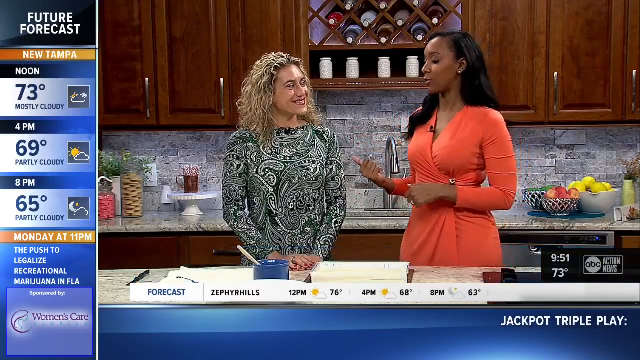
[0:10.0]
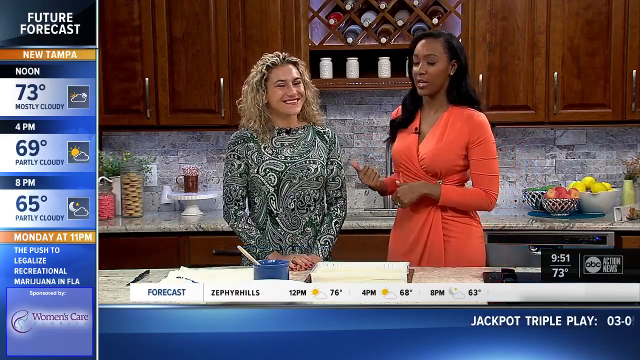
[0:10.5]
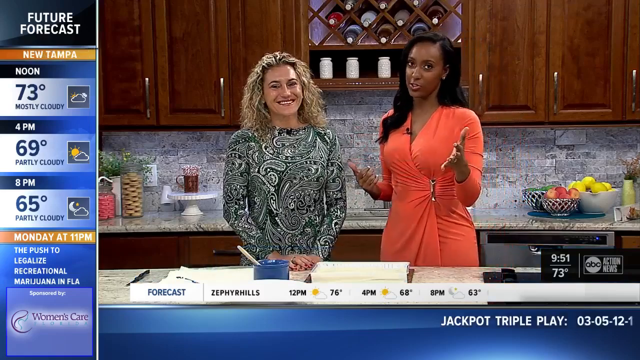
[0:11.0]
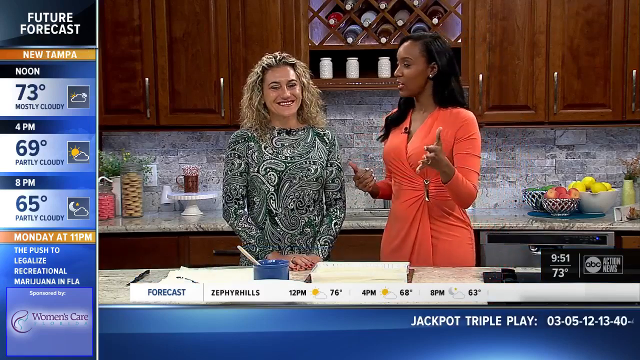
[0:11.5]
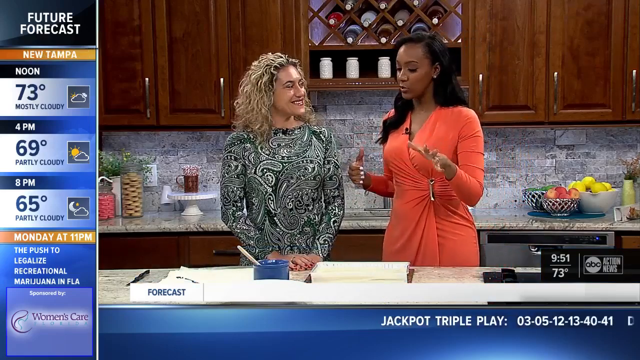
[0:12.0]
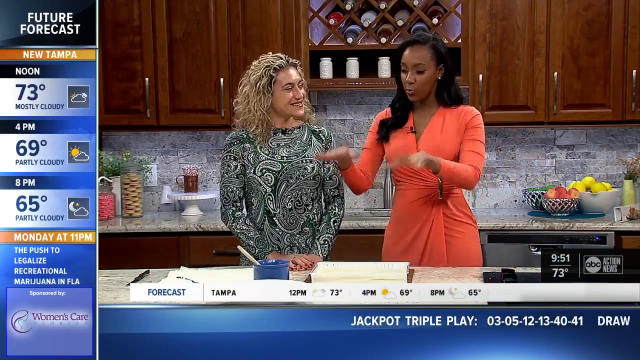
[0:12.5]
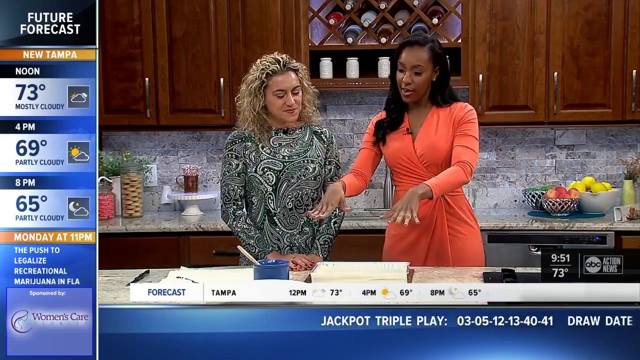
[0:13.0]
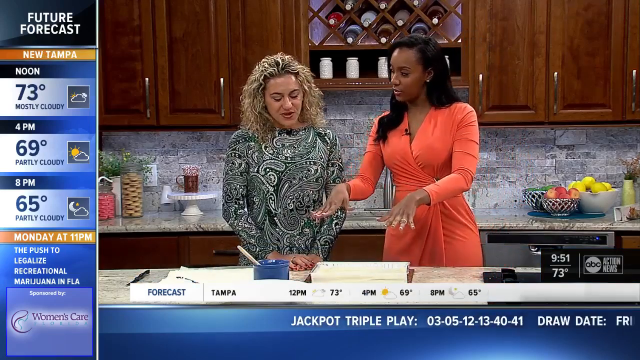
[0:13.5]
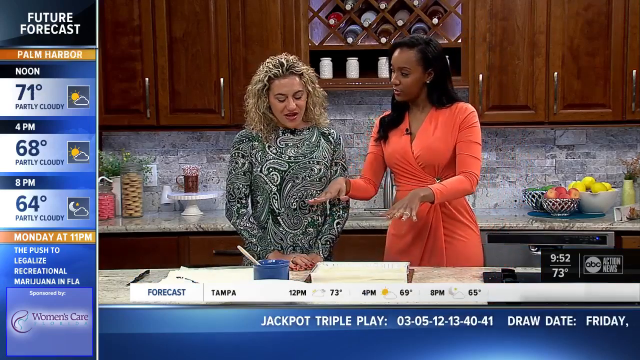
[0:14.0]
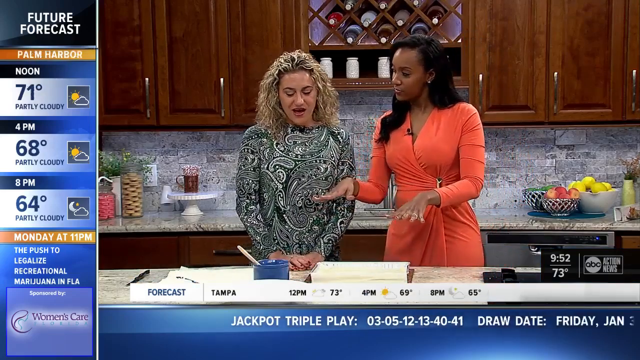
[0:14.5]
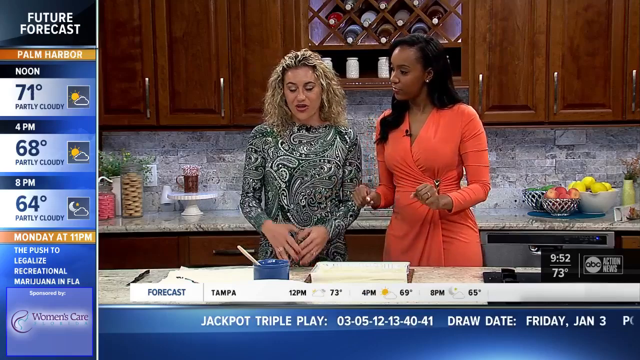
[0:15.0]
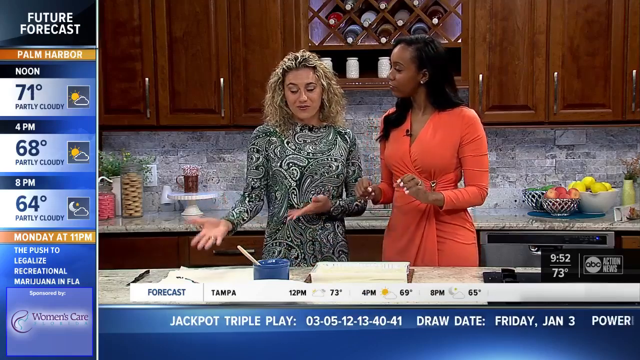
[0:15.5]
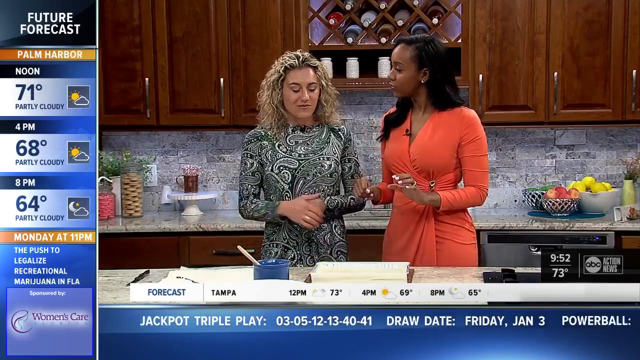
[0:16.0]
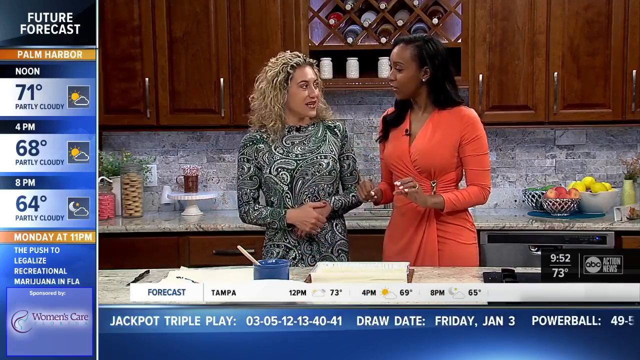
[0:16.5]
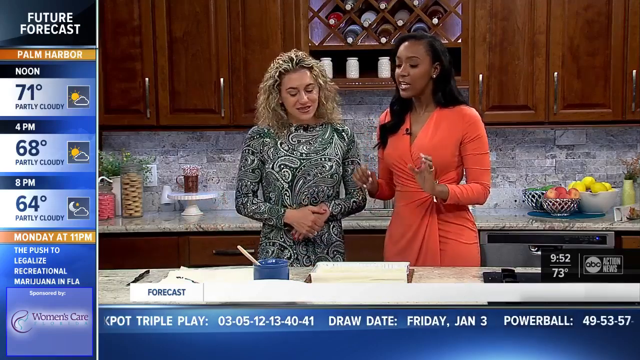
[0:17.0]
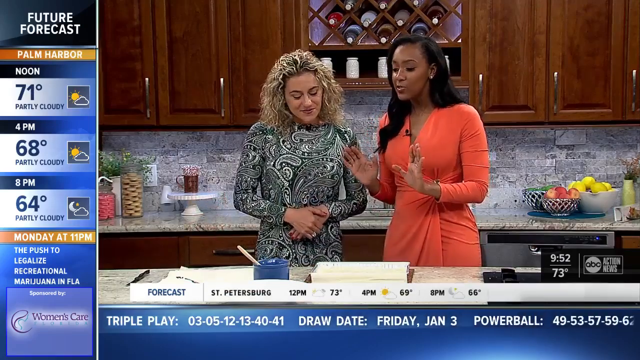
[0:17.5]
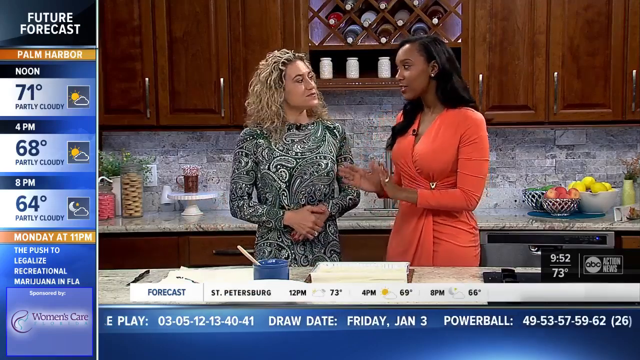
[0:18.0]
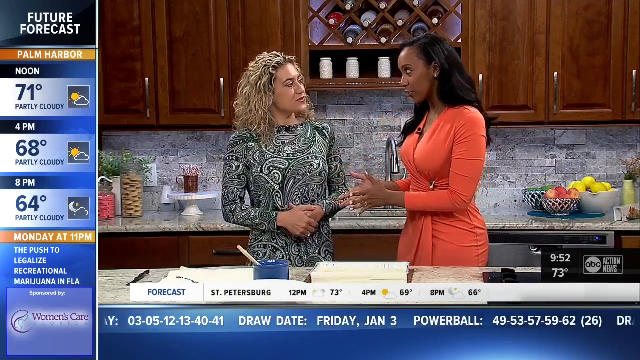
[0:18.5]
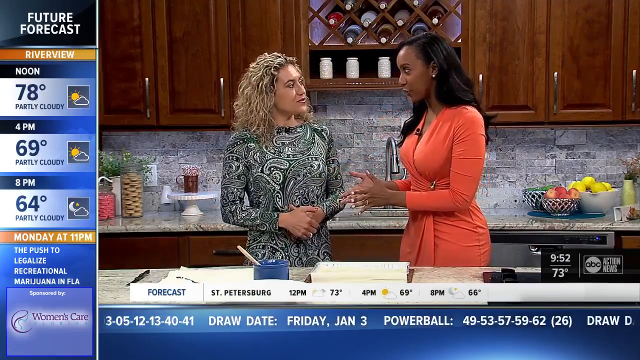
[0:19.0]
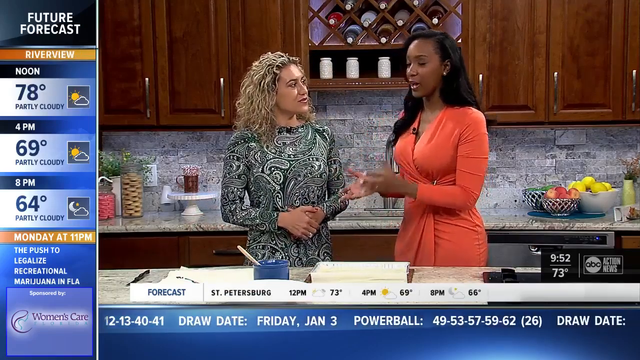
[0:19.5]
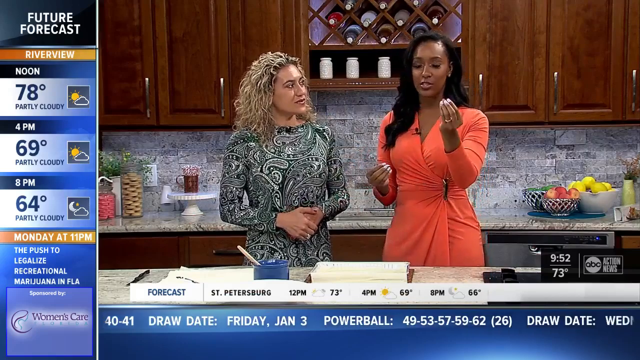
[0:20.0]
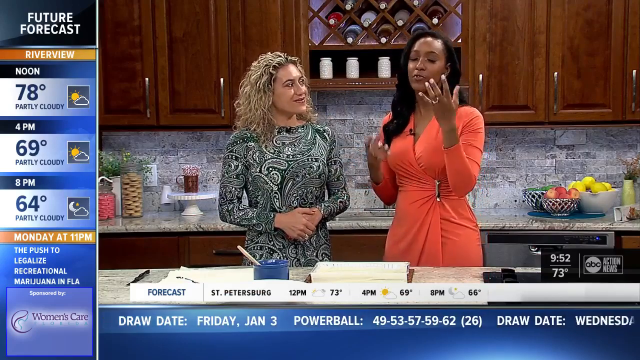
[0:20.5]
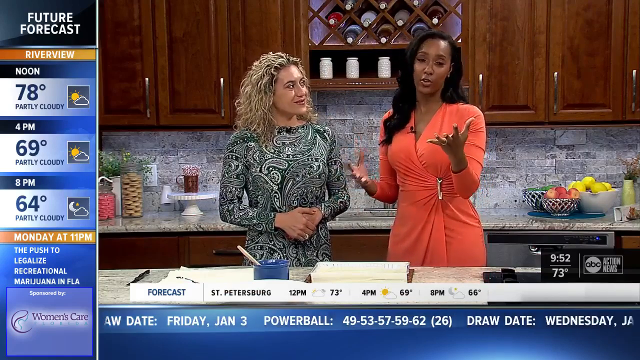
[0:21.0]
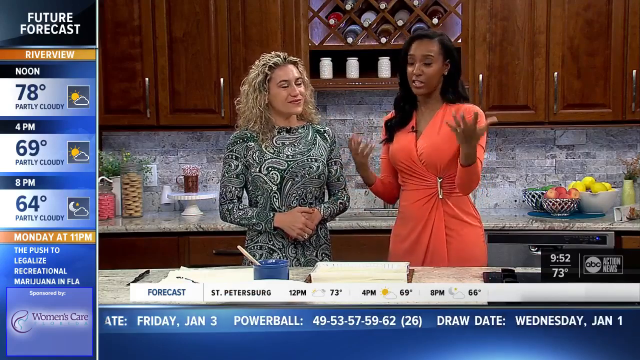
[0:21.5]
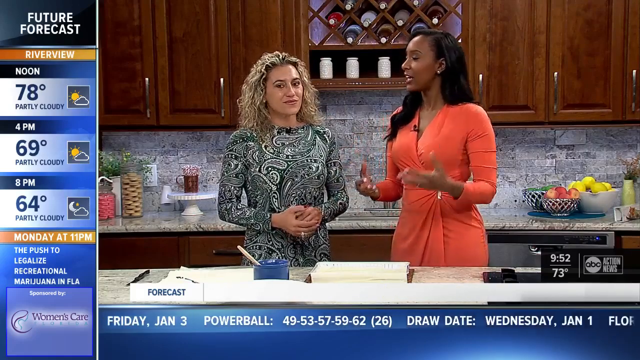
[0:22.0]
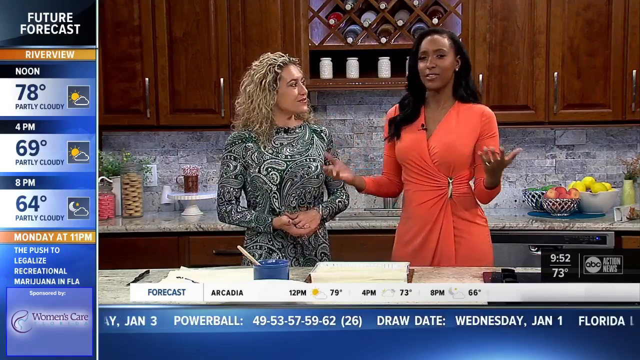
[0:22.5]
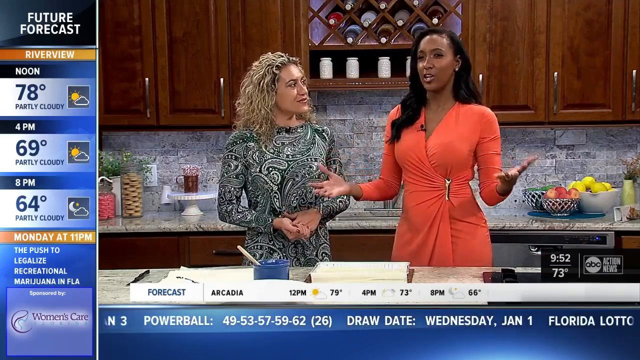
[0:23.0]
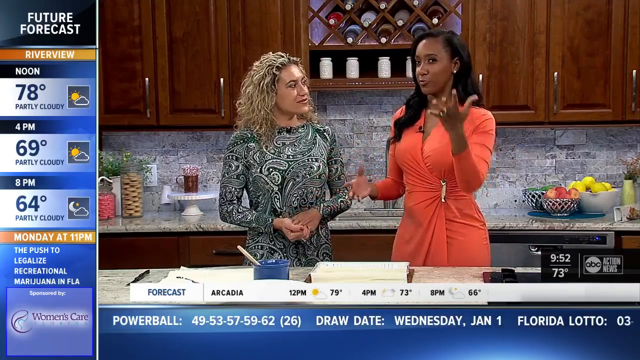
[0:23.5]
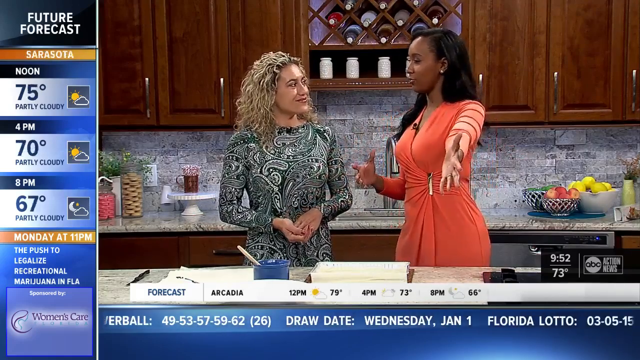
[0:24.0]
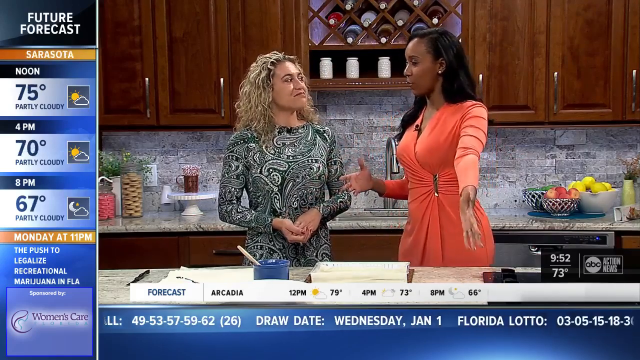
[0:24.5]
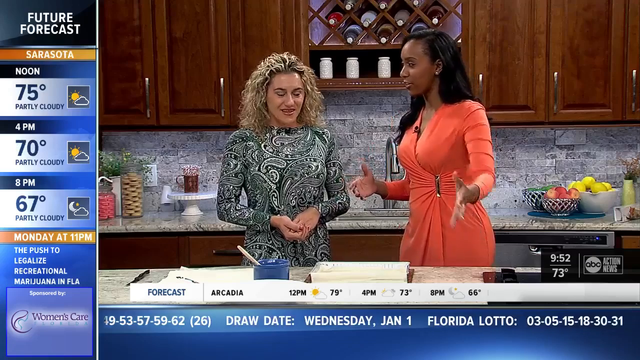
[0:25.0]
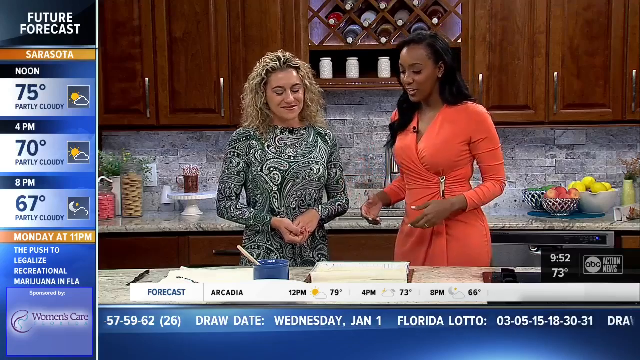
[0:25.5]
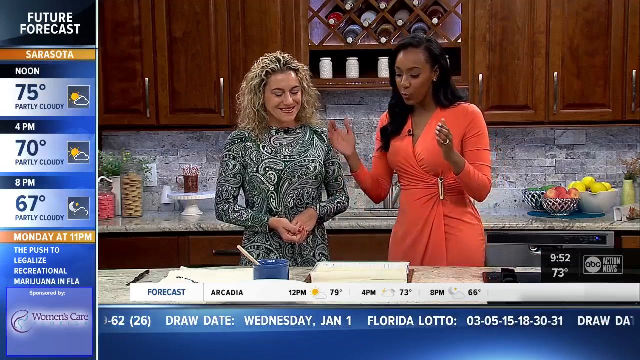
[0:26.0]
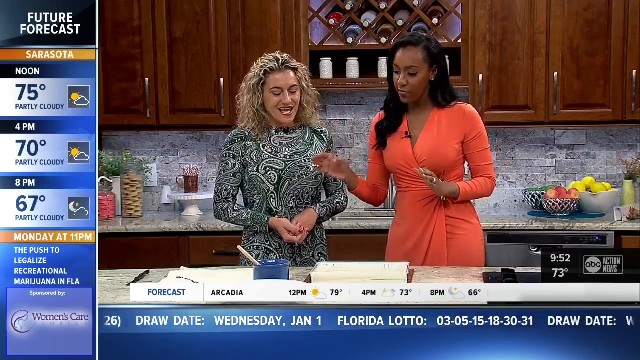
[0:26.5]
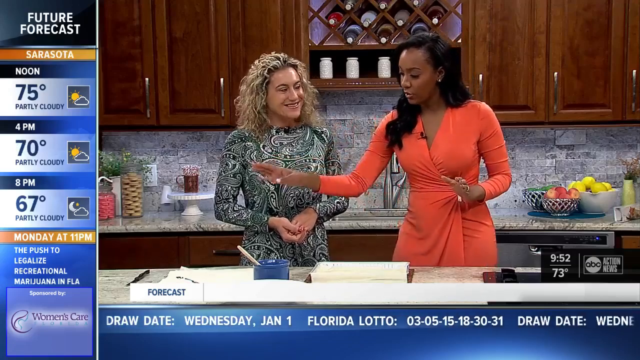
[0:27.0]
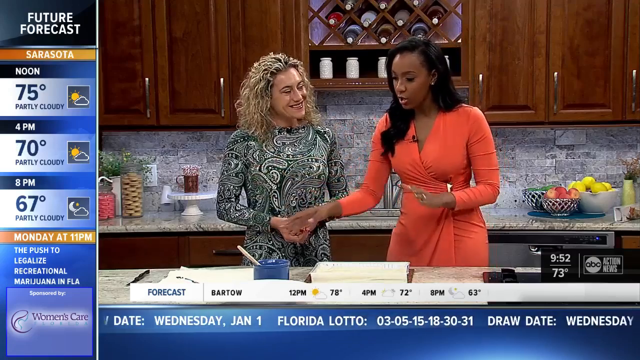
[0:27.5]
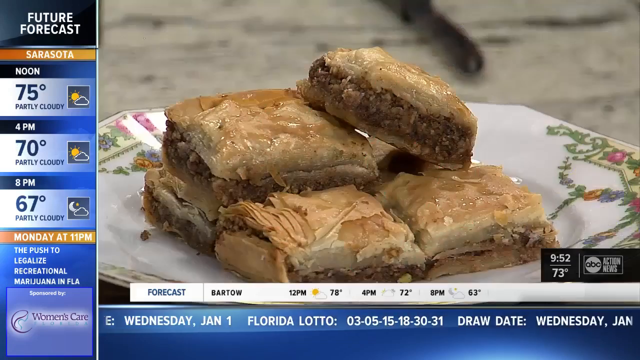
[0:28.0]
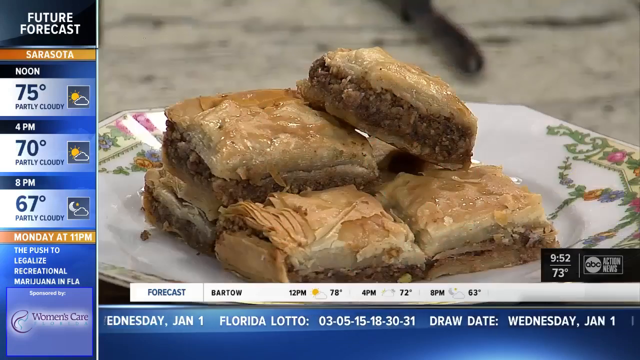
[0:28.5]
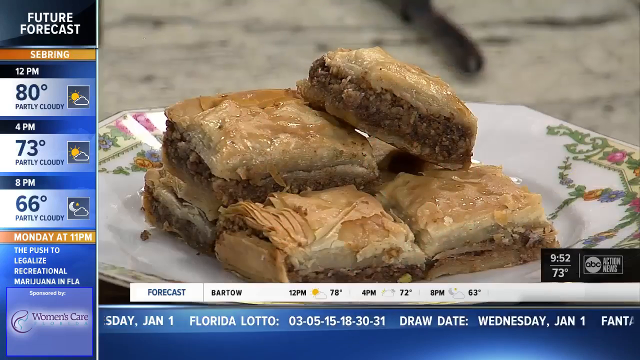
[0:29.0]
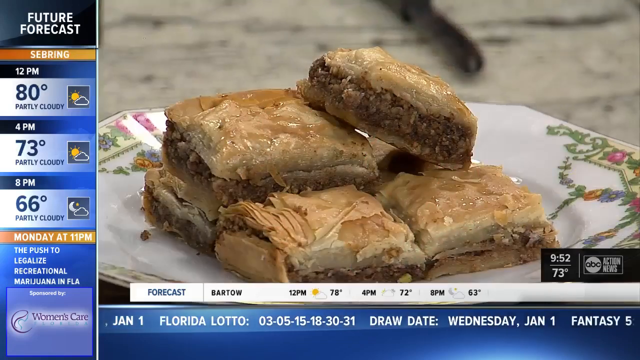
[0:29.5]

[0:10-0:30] The two women continue; one is African American, and the other is possibly mixed, with African American and maybe something else. Down below, text reads "jackpot triple play", which looks like a lottery advertisement. A forecast is also on screen, apparently going by times of the day: on the left side it says "future forecast", with noon at 73 degrees, 4 p.m. at 69 degrees, and 8 p.m. at 65 degrees, "partly cloudy". It also says "Monday at 11 p.m." and, below that, "the push to legalize recreational marijuana in Florida". Behind the women are kitchen cabinets and a small wine rack with some wine bottles. There is a counter with some fruit, possibly real or fake, and some other baking tools are on the table. A dishwasher is behind the African American woman, who is taller than the other woman.